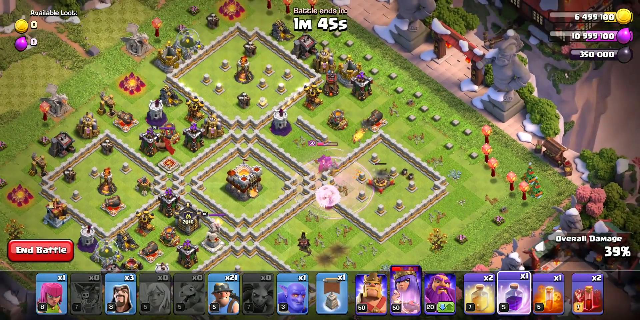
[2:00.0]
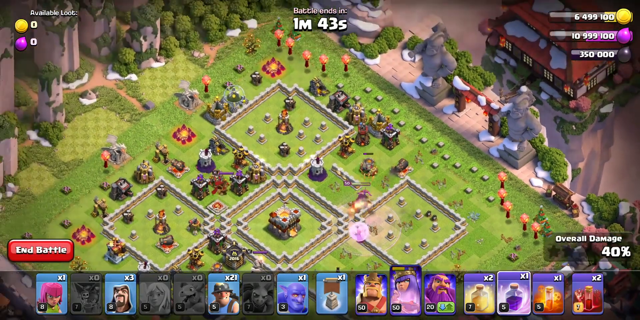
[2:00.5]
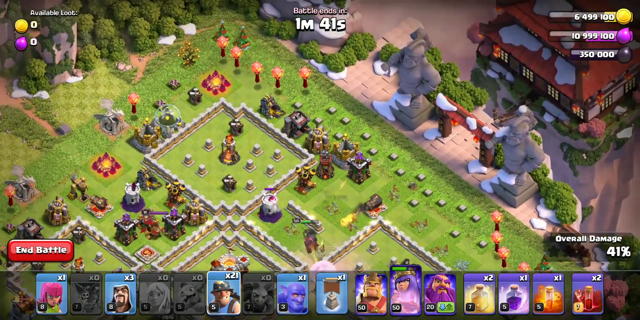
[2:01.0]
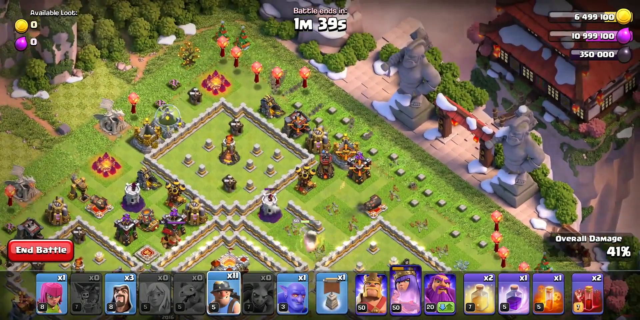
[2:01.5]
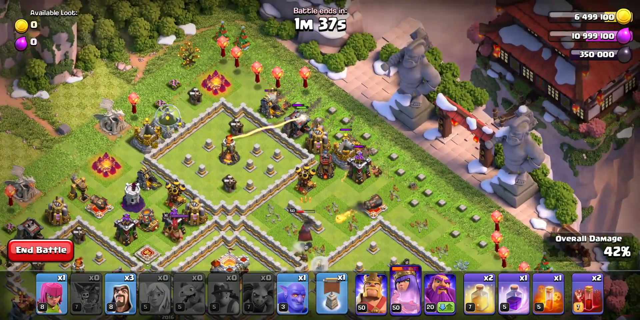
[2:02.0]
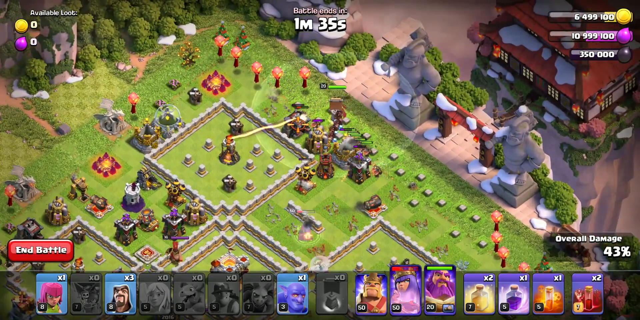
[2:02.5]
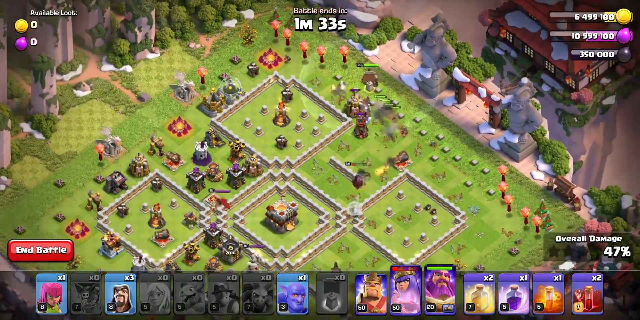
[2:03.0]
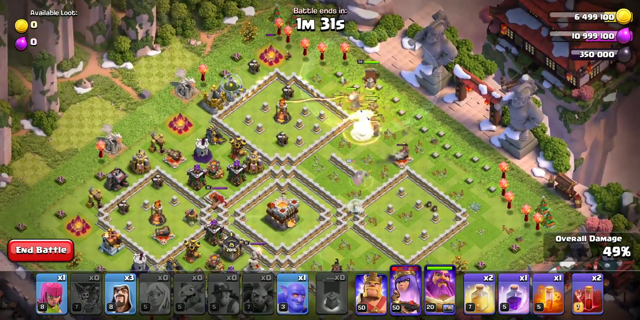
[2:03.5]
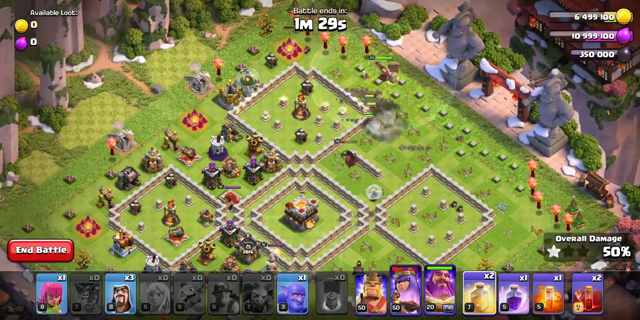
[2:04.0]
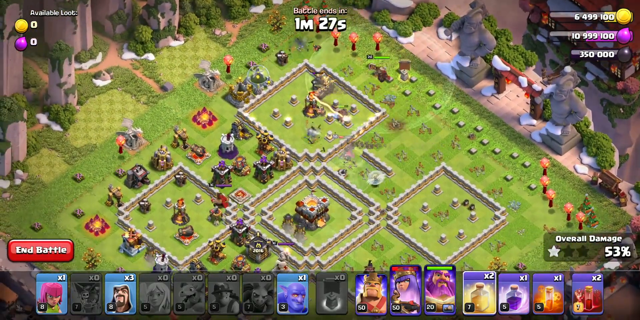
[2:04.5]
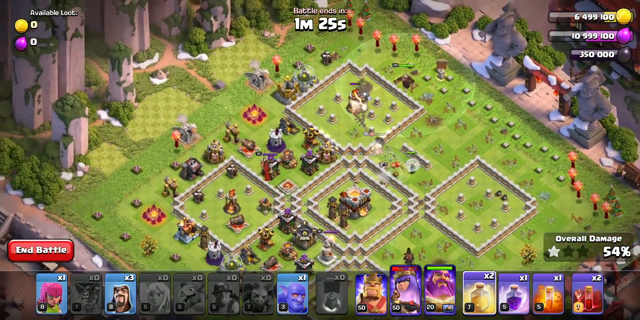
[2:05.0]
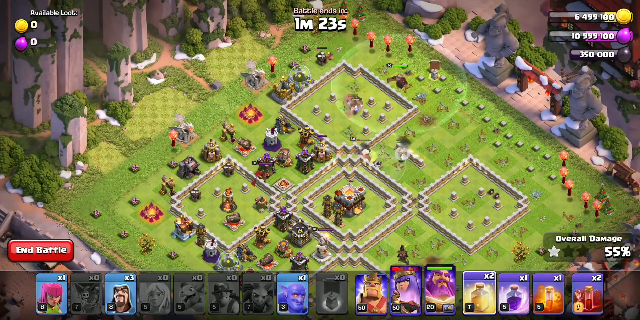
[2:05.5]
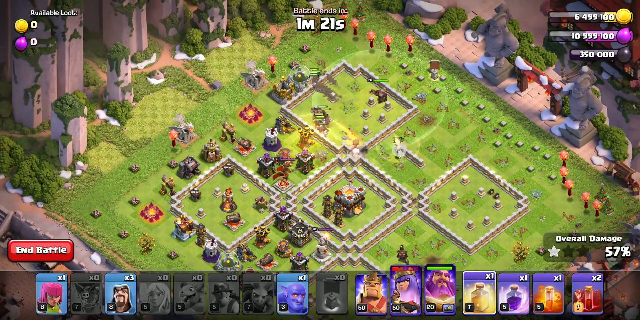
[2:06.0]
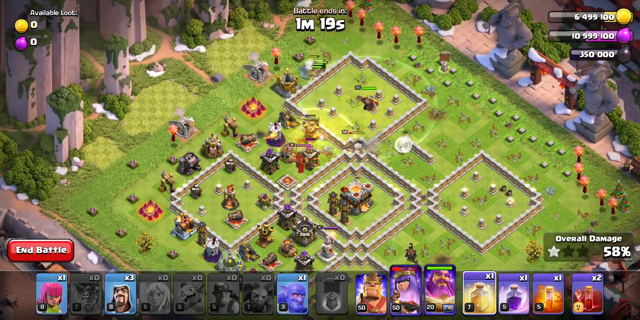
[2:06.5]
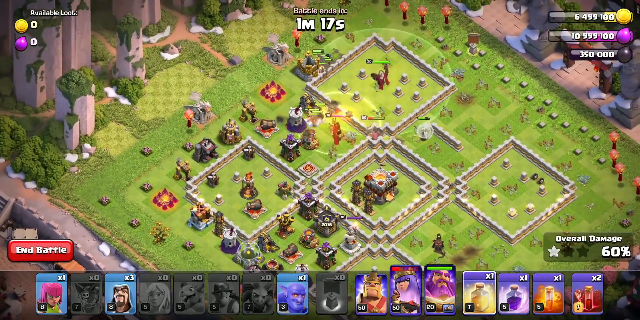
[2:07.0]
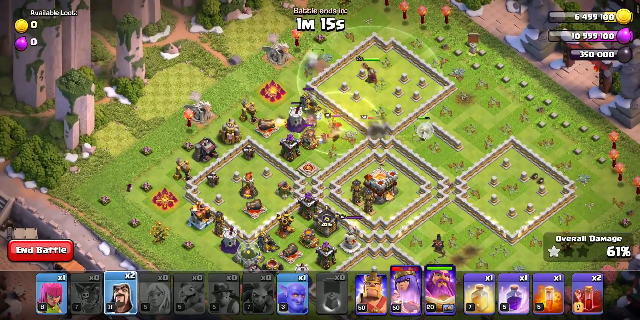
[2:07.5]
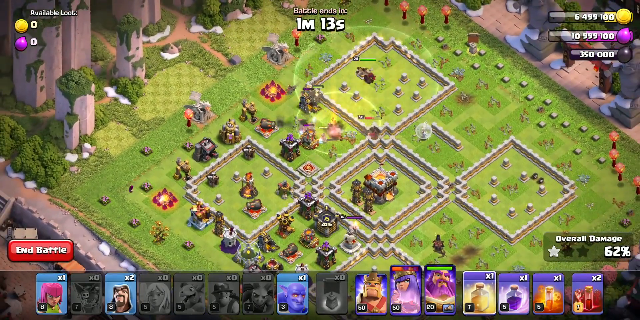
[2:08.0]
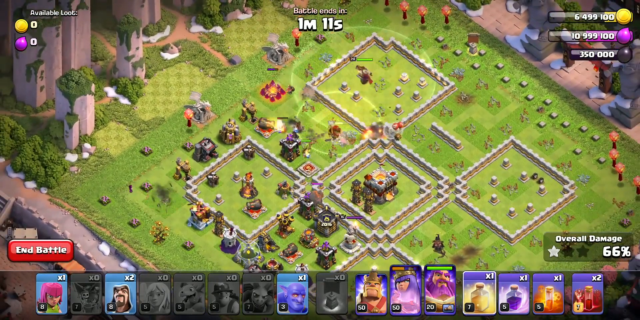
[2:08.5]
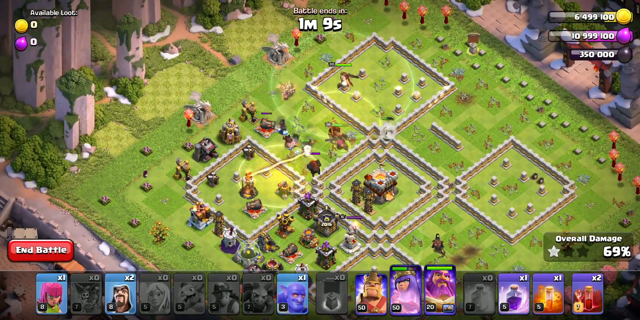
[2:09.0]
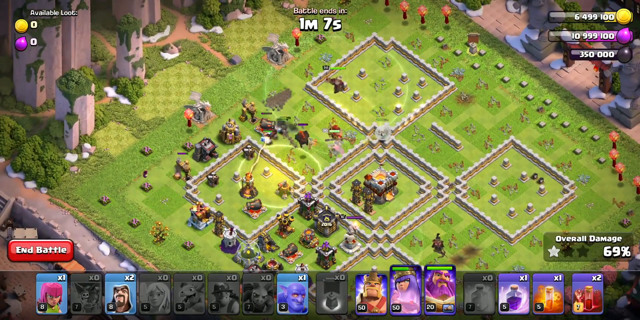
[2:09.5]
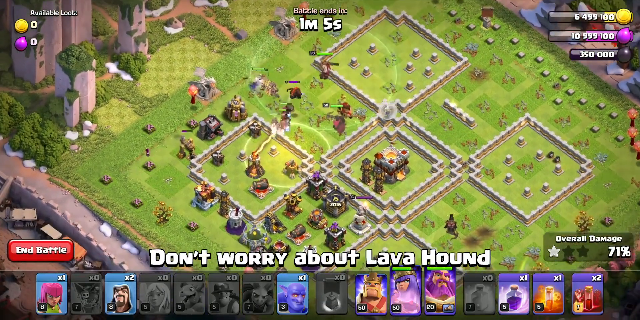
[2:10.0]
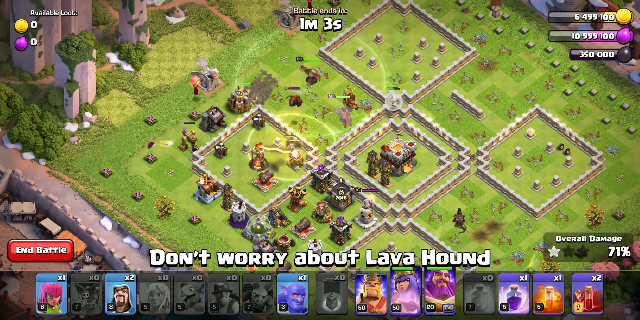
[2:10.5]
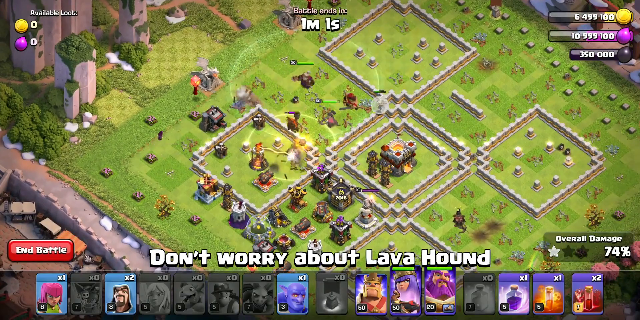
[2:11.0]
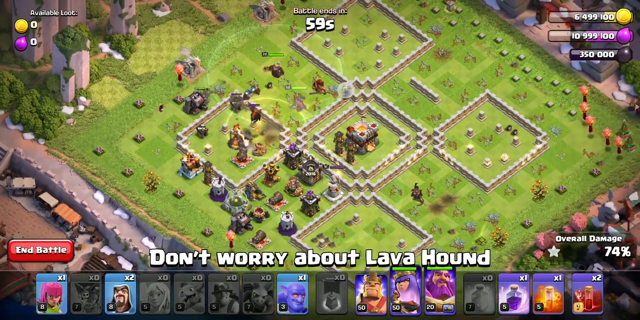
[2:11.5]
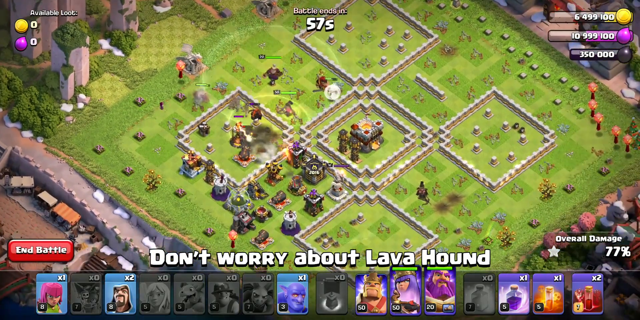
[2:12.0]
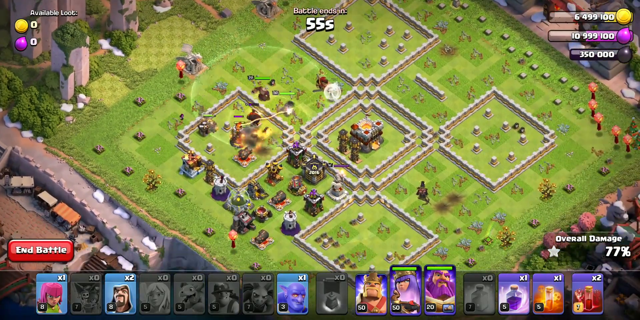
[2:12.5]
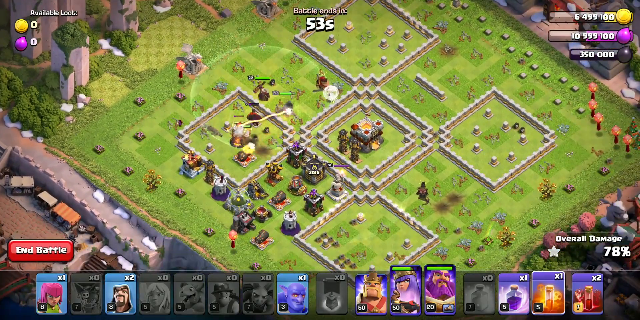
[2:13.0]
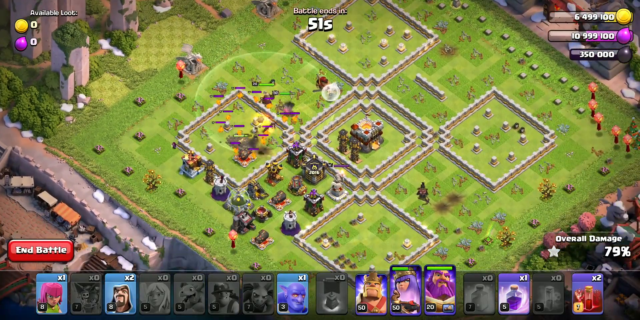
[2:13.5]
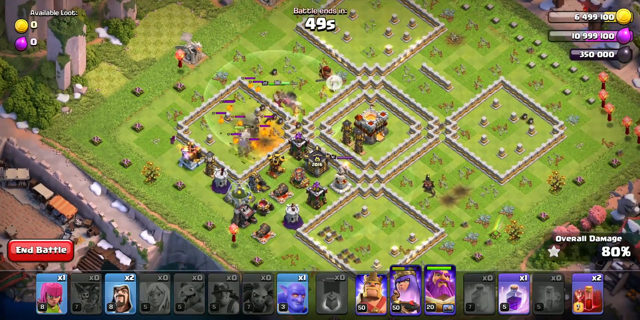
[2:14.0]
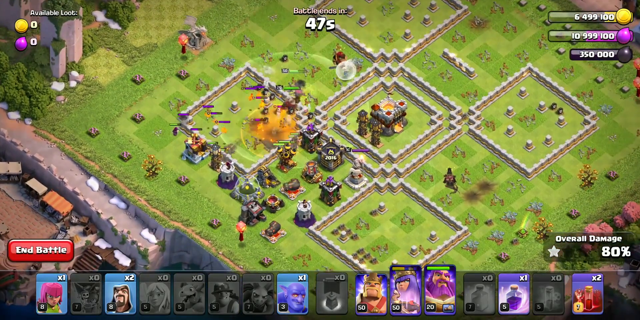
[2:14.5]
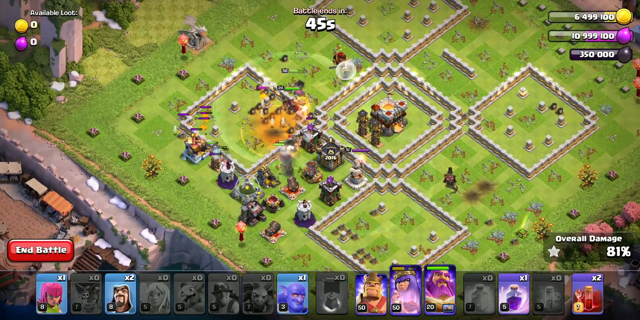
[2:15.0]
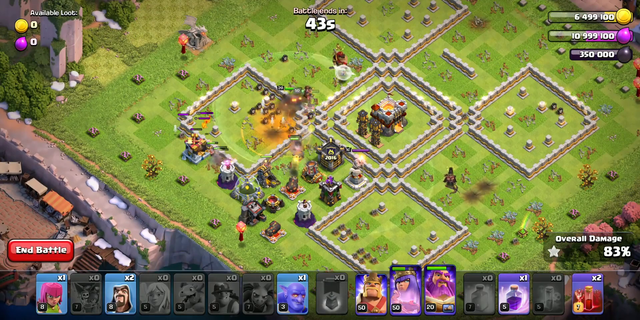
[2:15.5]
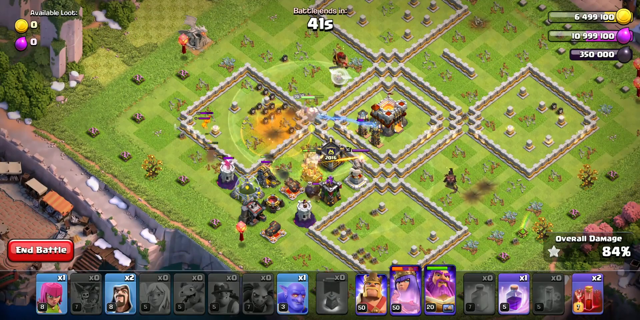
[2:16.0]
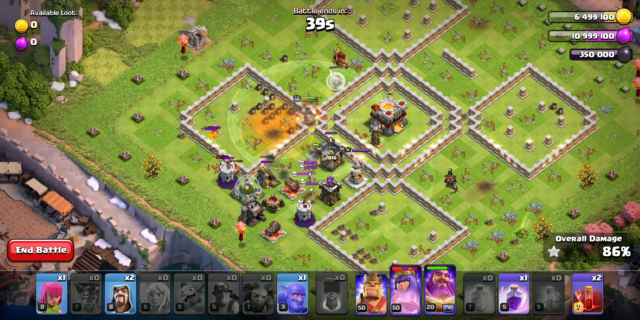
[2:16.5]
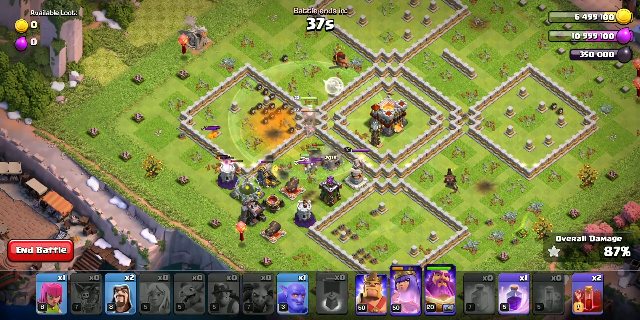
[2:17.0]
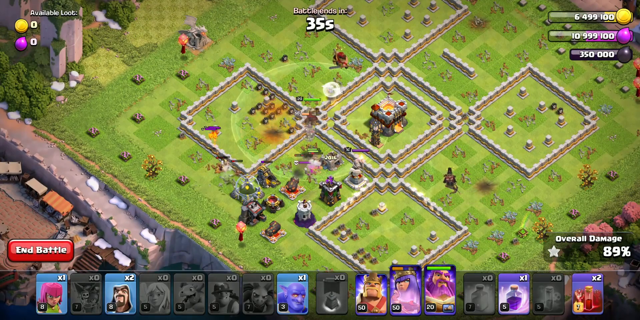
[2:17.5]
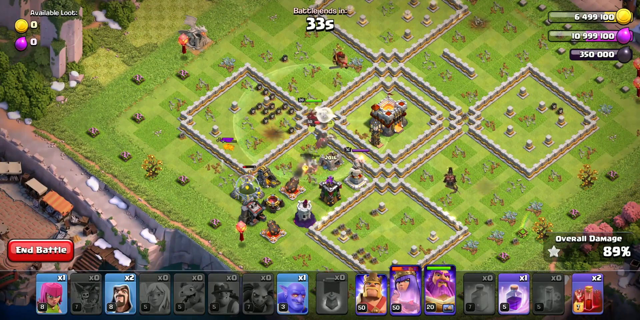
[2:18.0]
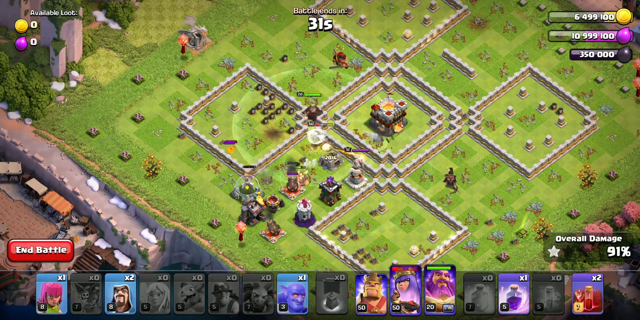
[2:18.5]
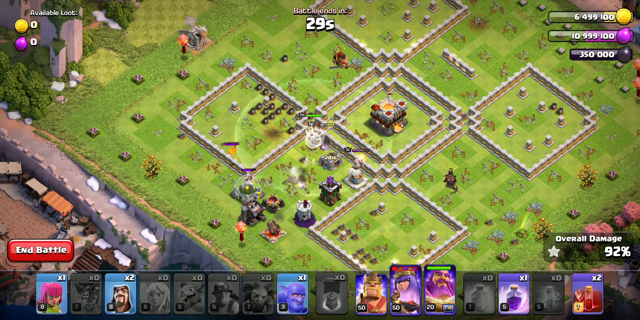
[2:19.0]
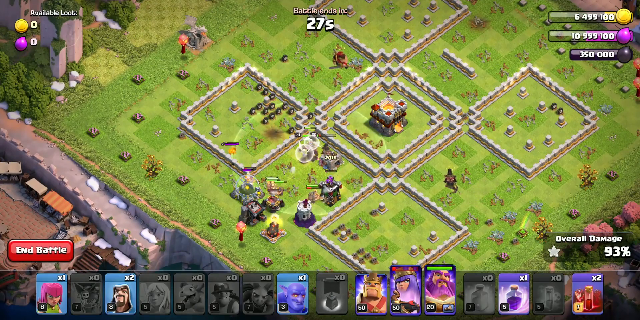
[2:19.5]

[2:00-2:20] A different segment starts with a timer of 1 minute 30 seconds. The map is similar in placement to the first half of the video, but this time the units used include wizards, super minions, bowlers and goblins. They destroy the stage much quicker than before, with about 20 seconds left when the round ends, receiving all three silver stars and 100% at the bottom right. There is no available loot: the far left displays zero coins and zero red paint, and these numbers stay the same. A rectangular end button is at the bottom left.